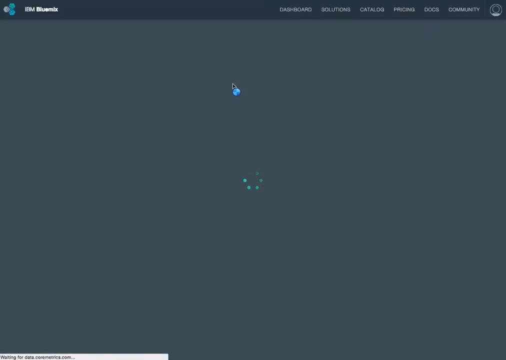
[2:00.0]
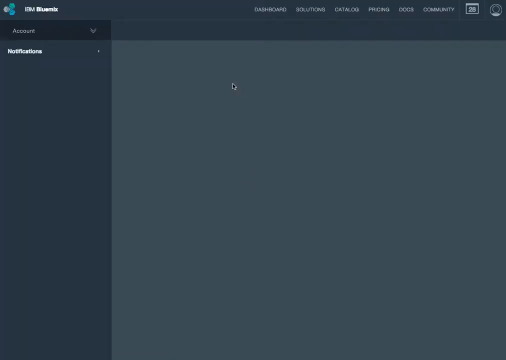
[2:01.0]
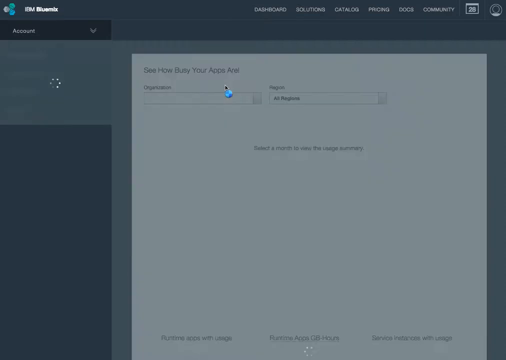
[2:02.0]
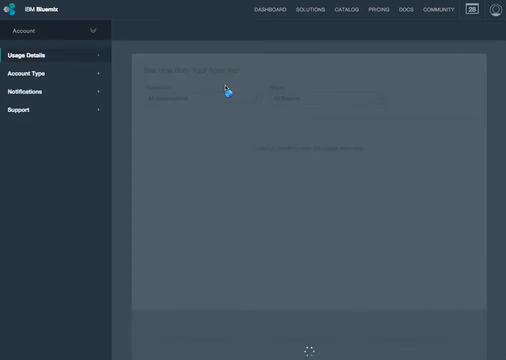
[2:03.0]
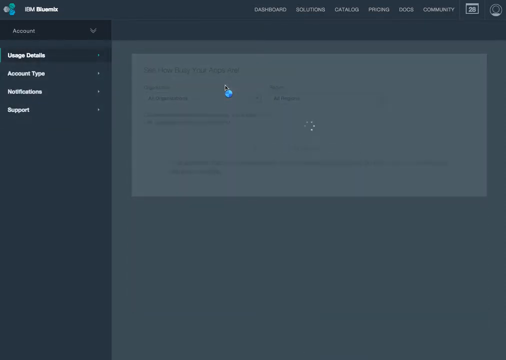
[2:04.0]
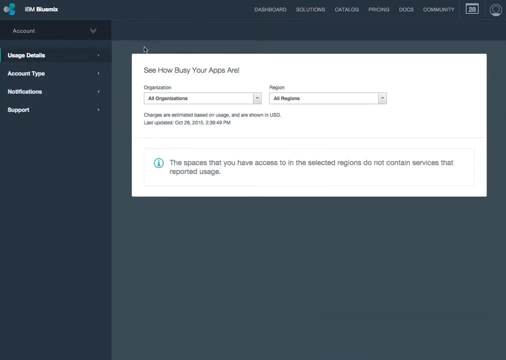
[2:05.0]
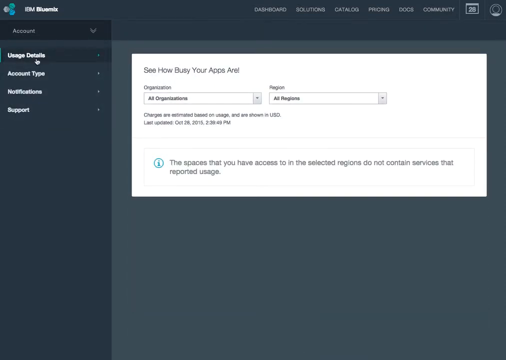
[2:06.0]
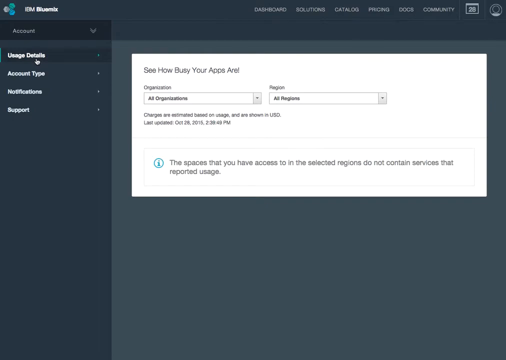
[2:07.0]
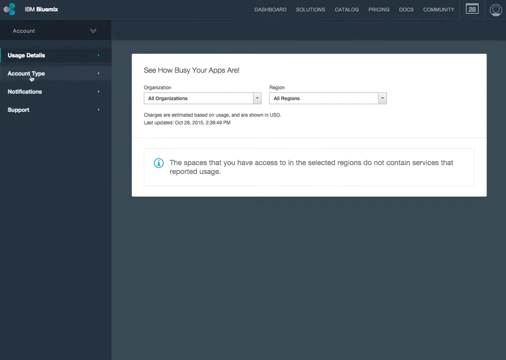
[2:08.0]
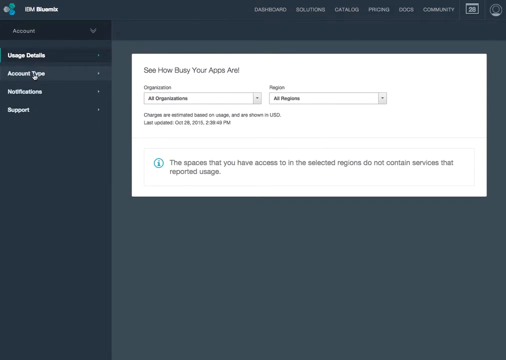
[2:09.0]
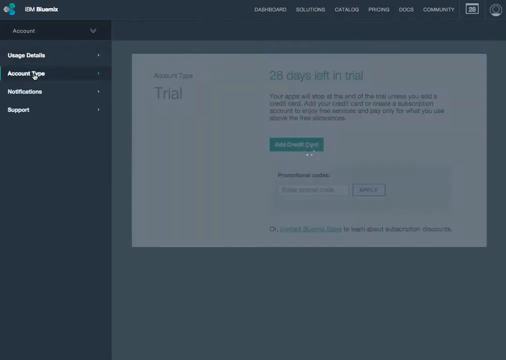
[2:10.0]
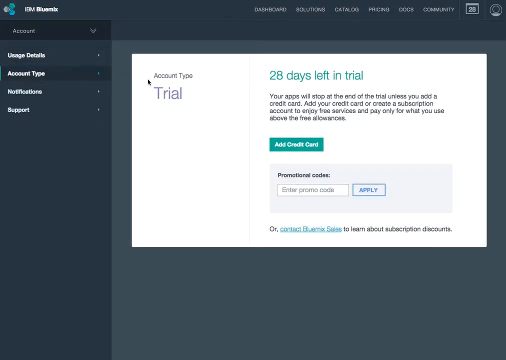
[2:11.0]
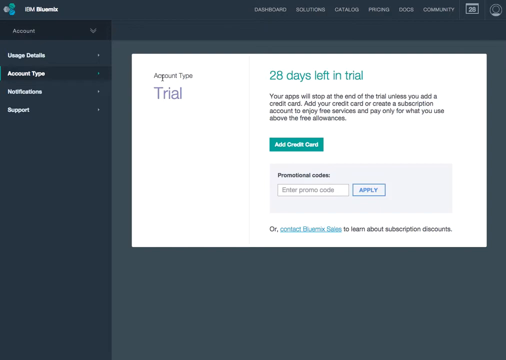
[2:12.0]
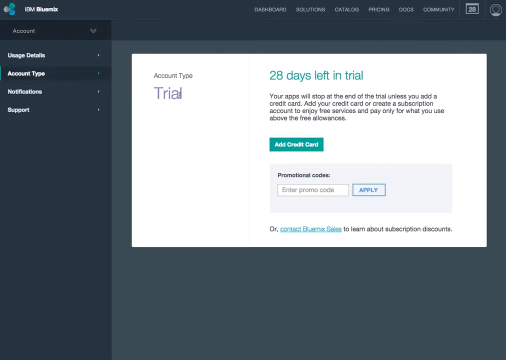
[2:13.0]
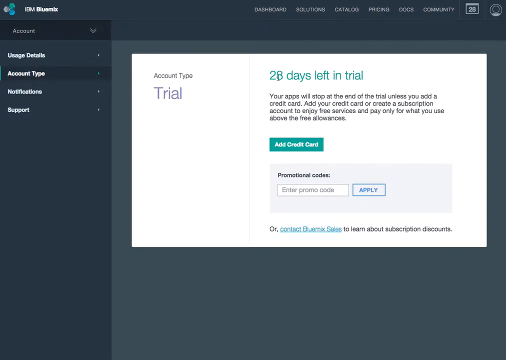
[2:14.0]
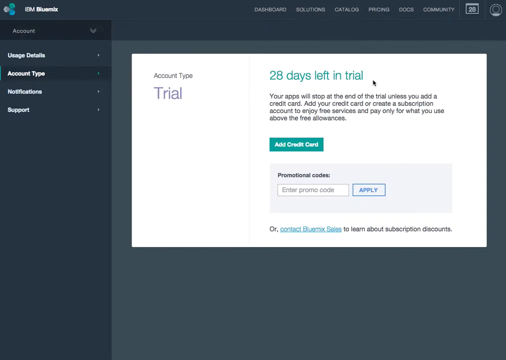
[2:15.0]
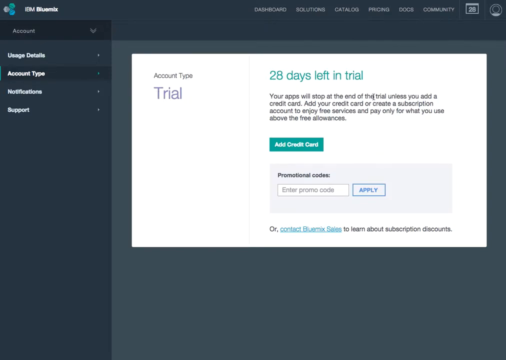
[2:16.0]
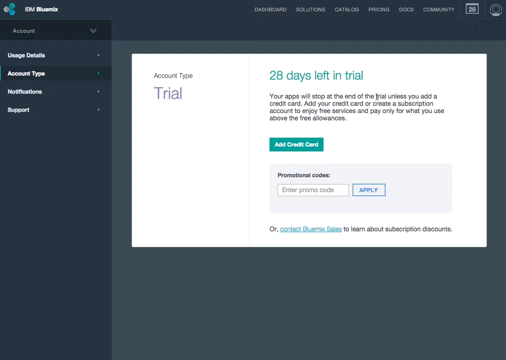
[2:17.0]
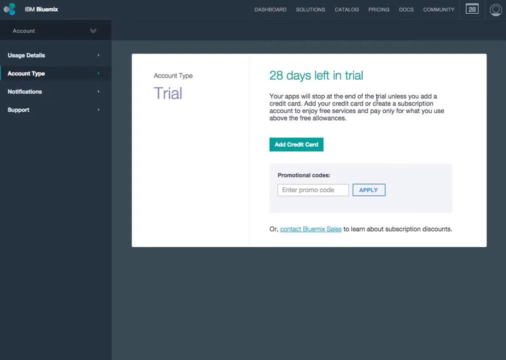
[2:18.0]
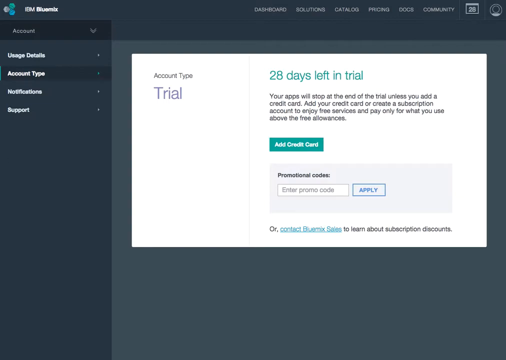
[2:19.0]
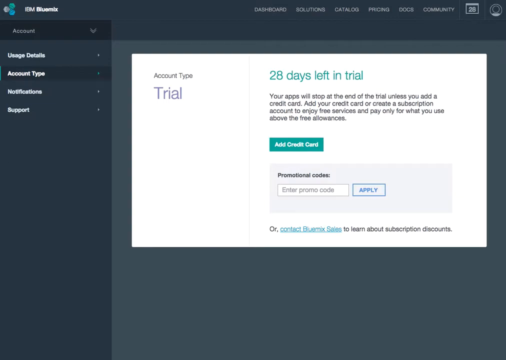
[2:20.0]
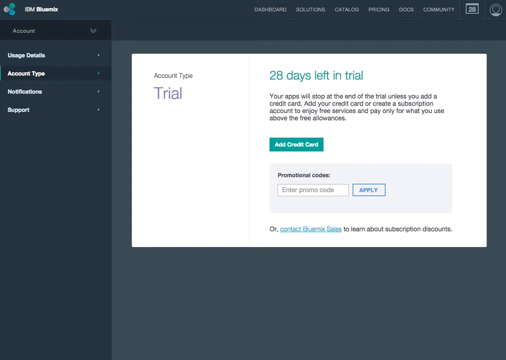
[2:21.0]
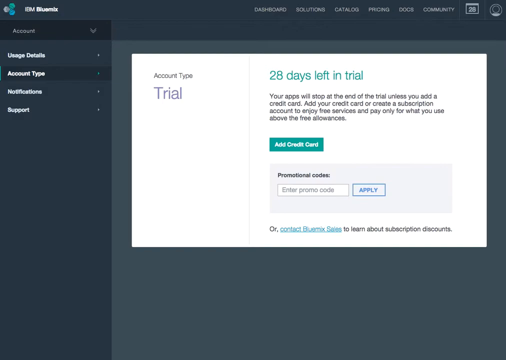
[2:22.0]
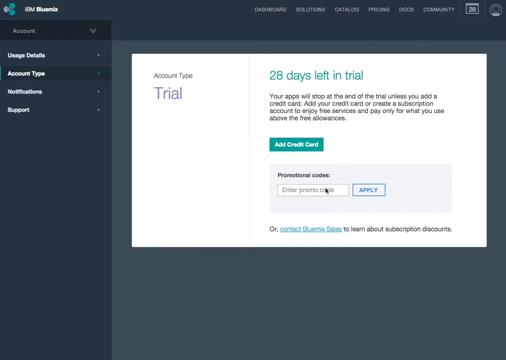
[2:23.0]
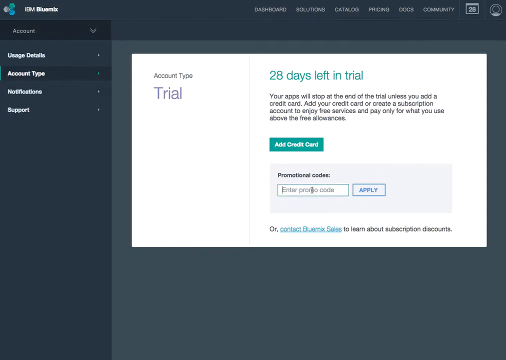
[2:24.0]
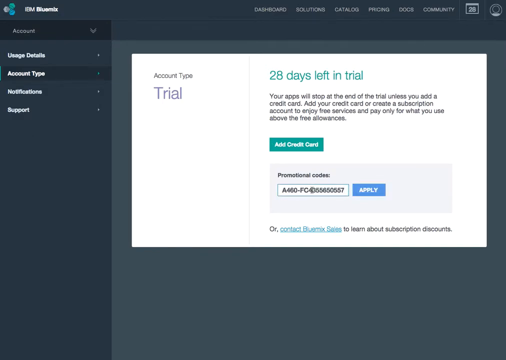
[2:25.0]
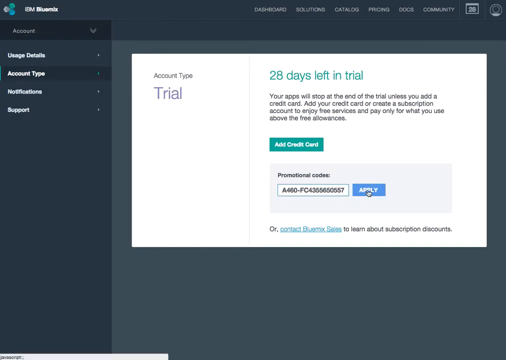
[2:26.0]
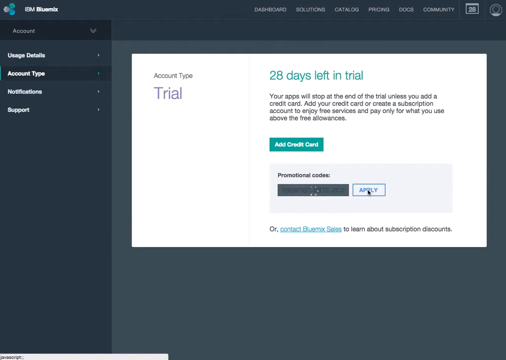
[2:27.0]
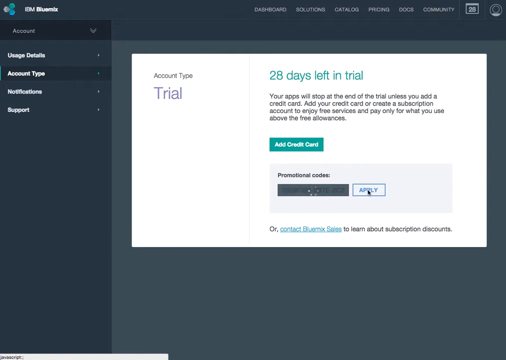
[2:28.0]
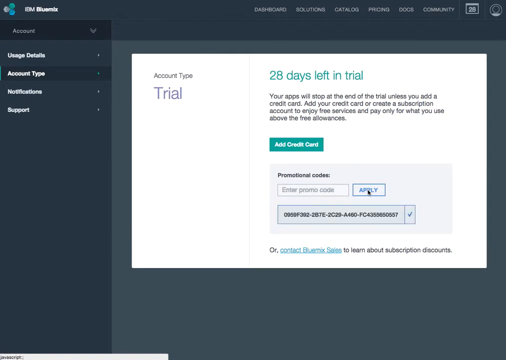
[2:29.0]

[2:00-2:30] A webpage is loading, indicated by a circular symbol in the middle of the page, and it loads slowly. On the left is a section that looks to be a vertical menu with two items, account and notifications. On the upper right is a right-justified horizontal menu. A loading symbol appears on the left vertical menu, and more menu options then pop up in it. The mouse pointer hovers over the menu options on the left and clicks on account type, and the account type page pops up on the right side.